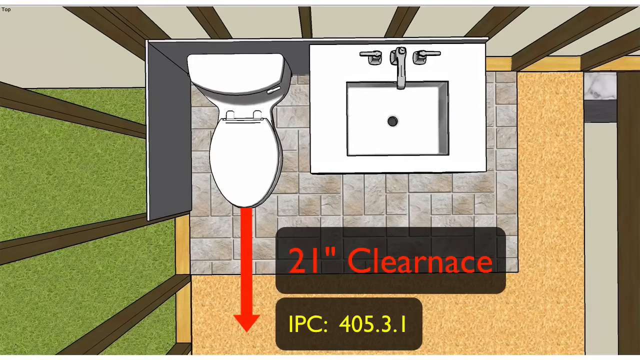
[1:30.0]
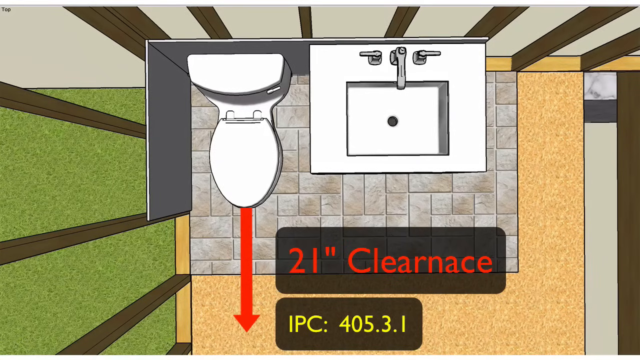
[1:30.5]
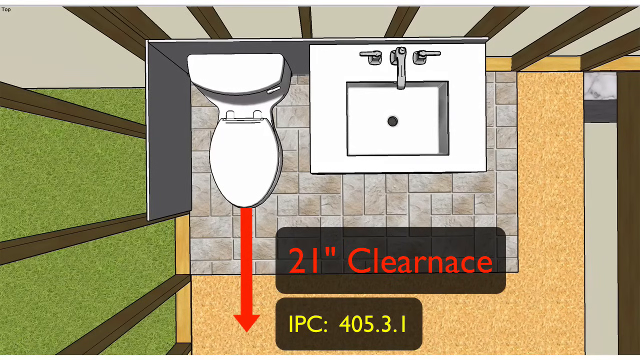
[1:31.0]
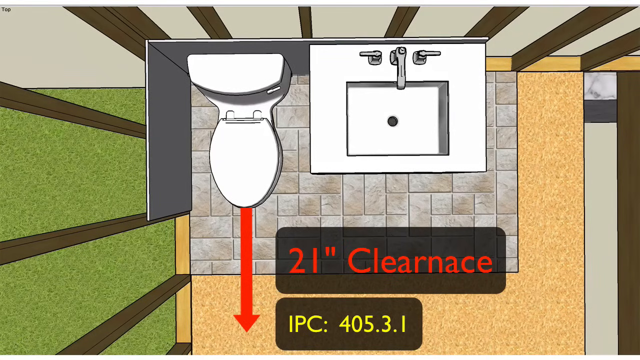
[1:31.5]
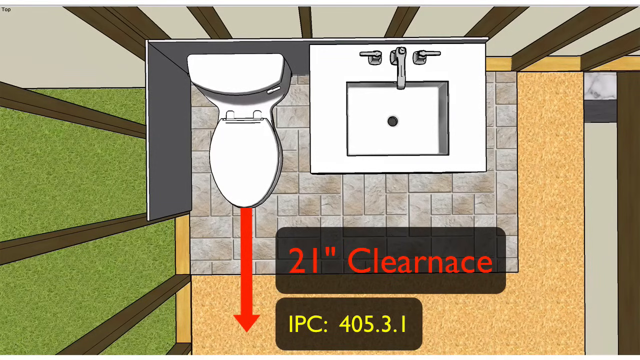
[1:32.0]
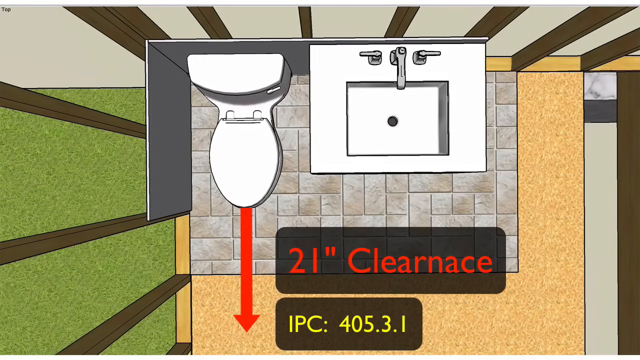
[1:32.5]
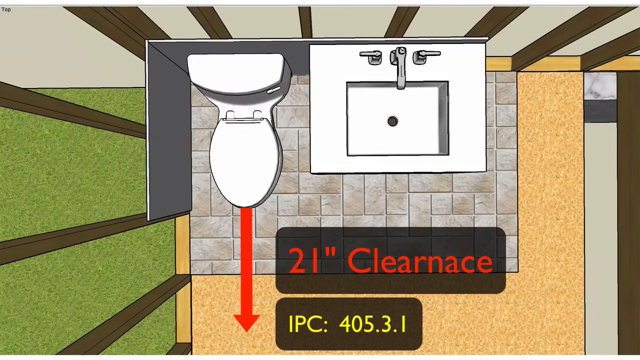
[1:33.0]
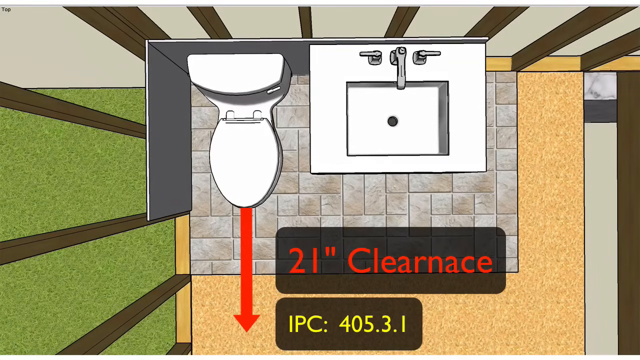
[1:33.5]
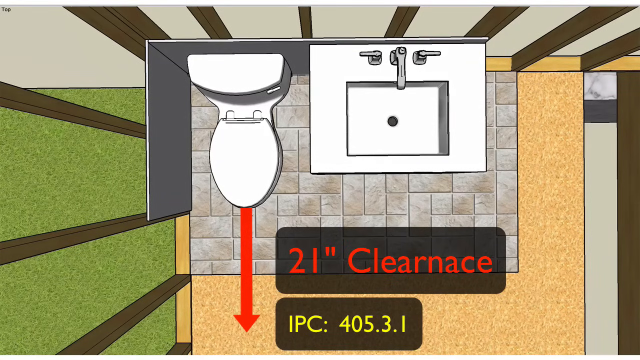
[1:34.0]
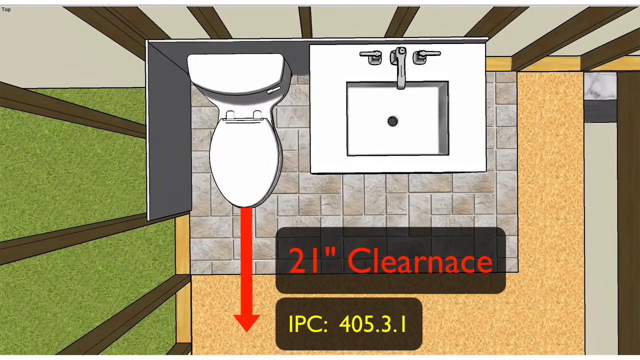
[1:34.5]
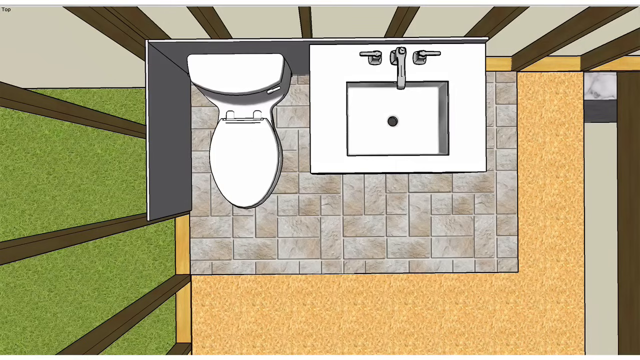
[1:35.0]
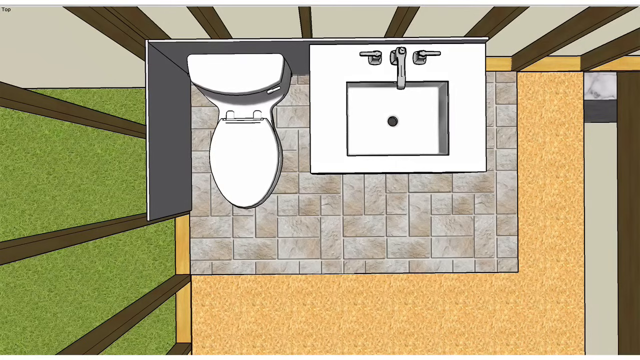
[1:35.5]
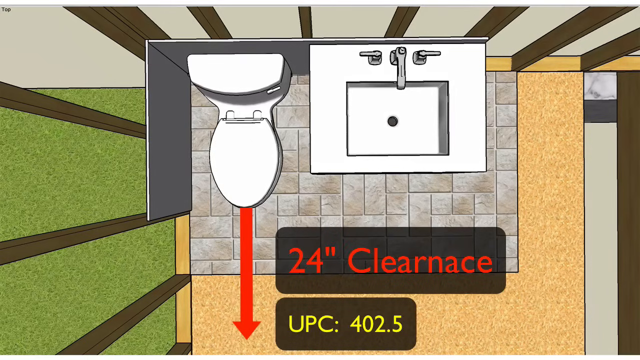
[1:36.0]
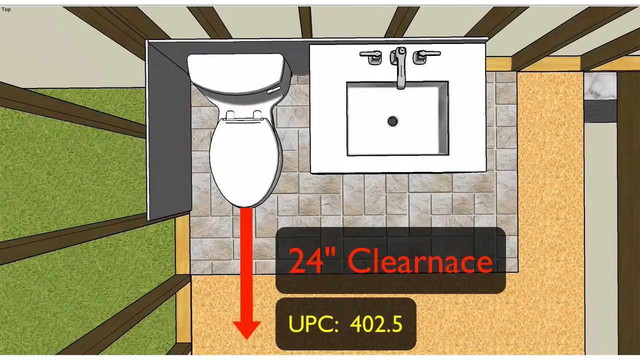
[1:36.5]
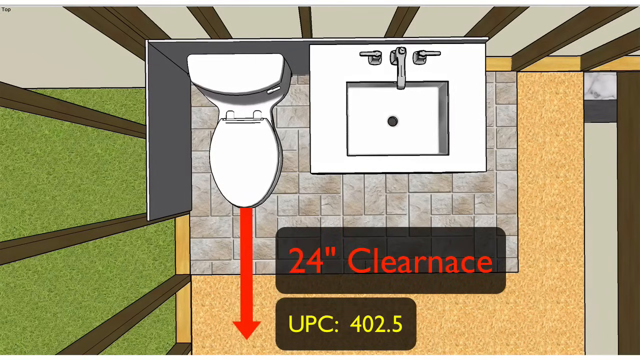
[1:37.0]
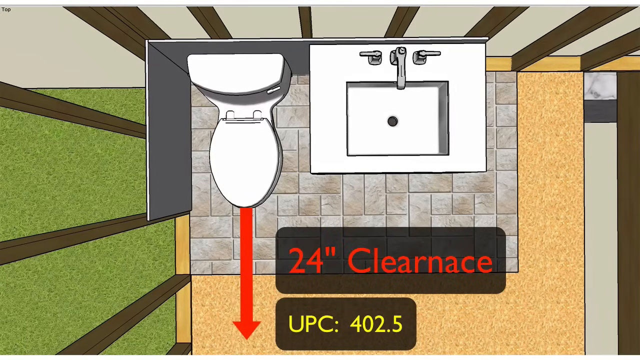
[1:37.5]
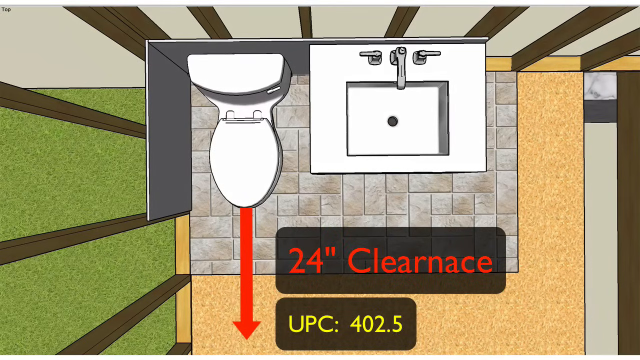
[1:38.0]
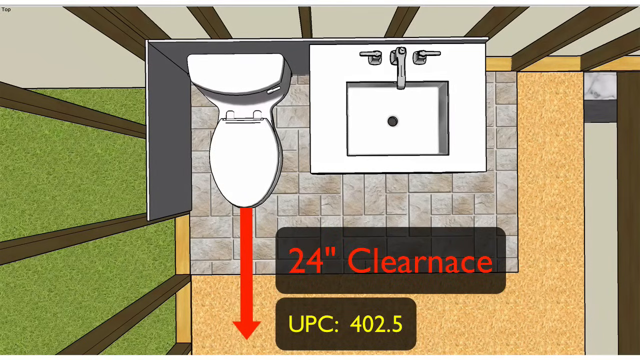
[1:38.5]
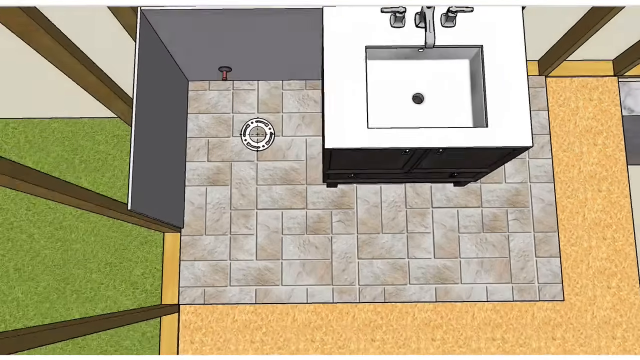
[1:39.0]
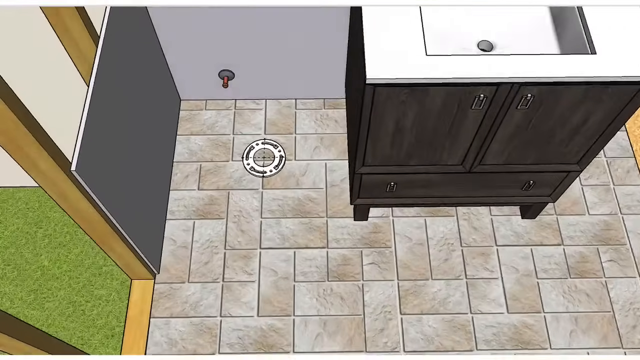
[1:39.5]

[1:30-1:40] An aerial view of a toilet shows the toilet seat and cistern, faucets on a sink, a tiled floor, wooden frames, and text reading "21'' Clearnace" and "IPC: 405.3.1". There is also a wooden part on the floor and a green section visible from inside the toilet. The measurement and code on the floor at the bottom of the screen are replaced by "24'' Clearnace" and "UPC: 402.5". The video then zooms in on the floor, the angle changing gradually from an aerial view to an angled close shot of the floor. As this happens, the toilet seat is replaced by a drain on the floor. What looks like a red switch is on the light grey wall, in front of the drain, and the wooden cupboard housing the sink and faucets is on the right side of the screen.